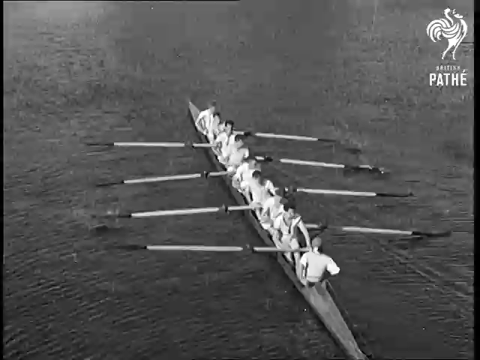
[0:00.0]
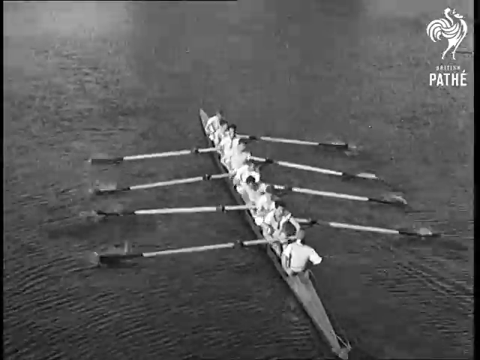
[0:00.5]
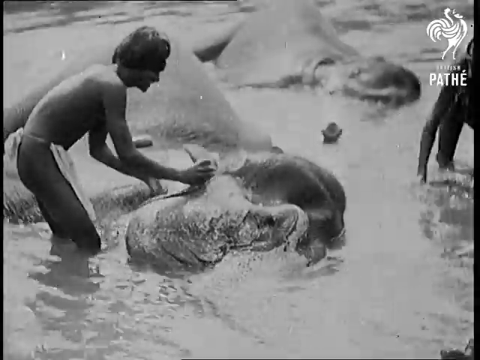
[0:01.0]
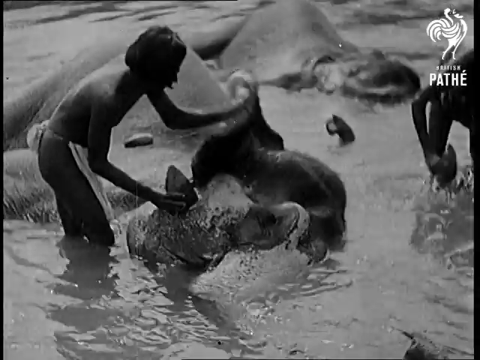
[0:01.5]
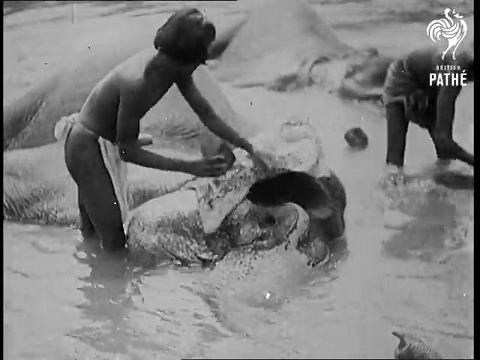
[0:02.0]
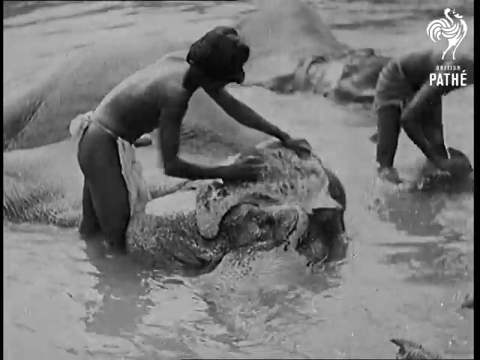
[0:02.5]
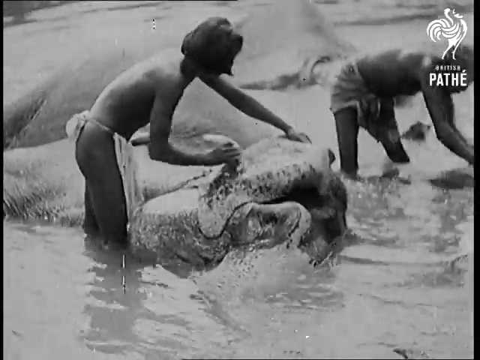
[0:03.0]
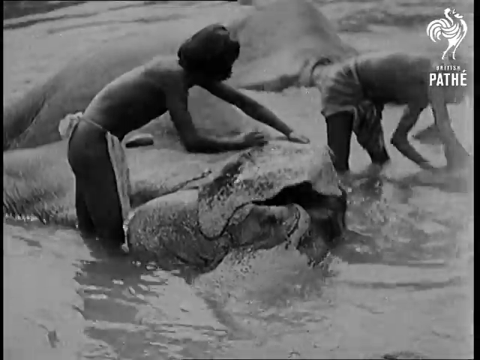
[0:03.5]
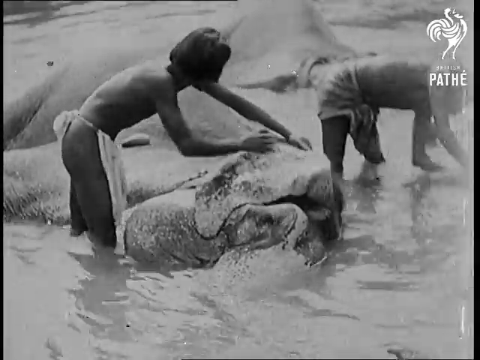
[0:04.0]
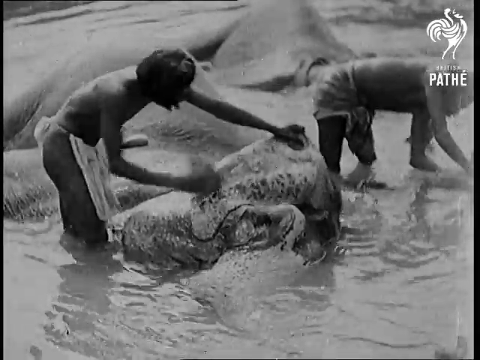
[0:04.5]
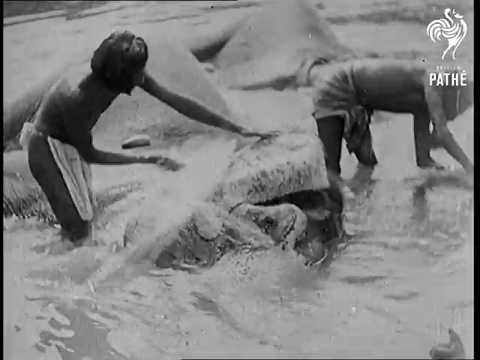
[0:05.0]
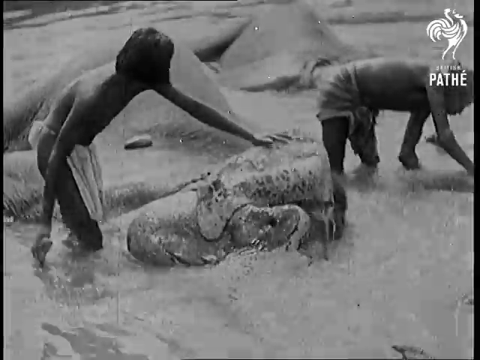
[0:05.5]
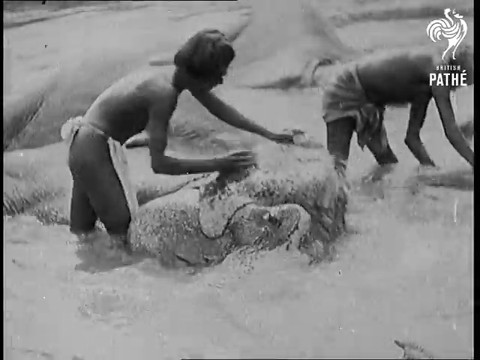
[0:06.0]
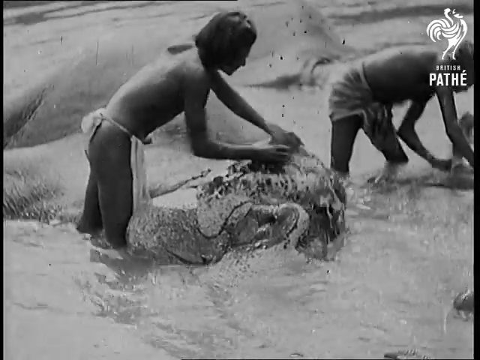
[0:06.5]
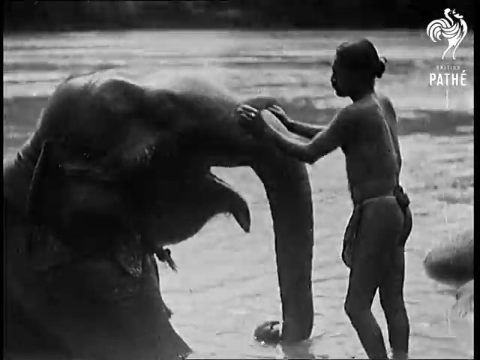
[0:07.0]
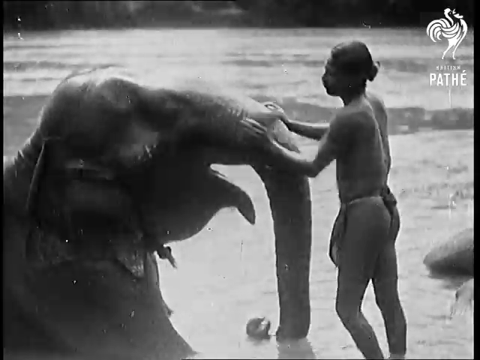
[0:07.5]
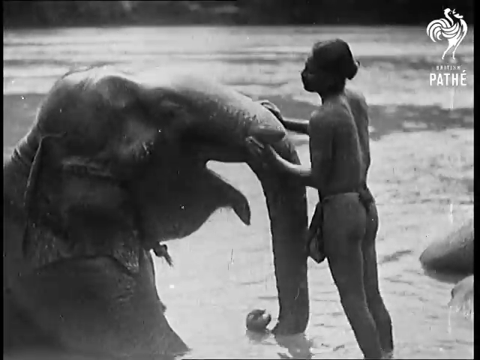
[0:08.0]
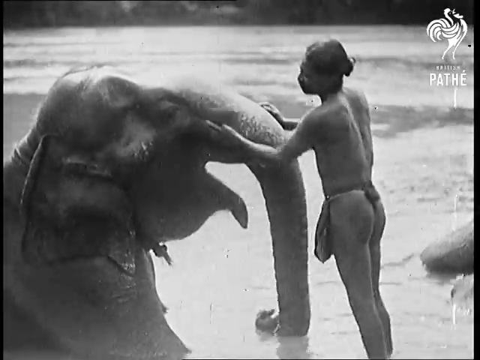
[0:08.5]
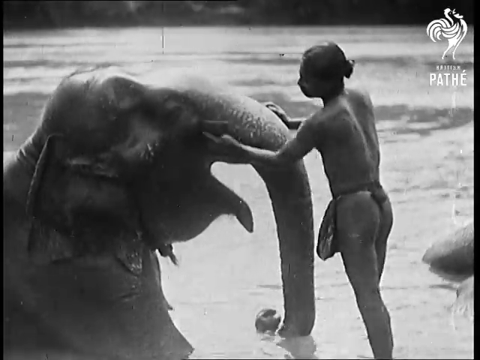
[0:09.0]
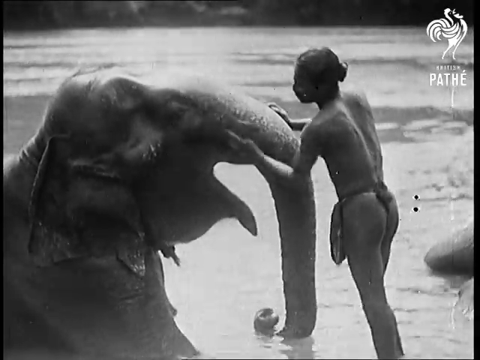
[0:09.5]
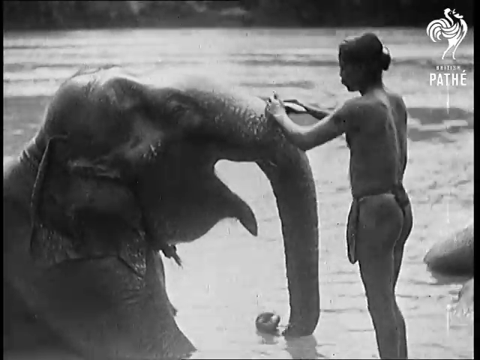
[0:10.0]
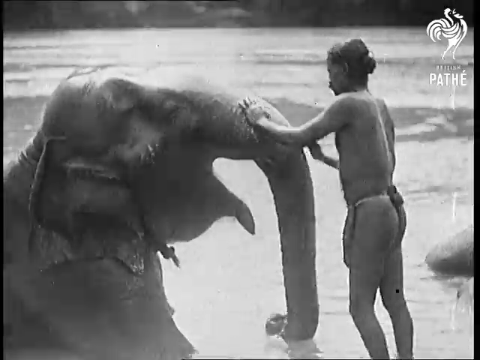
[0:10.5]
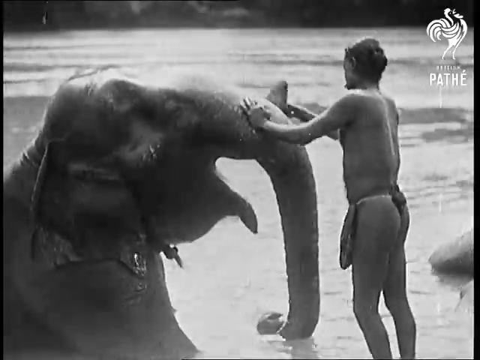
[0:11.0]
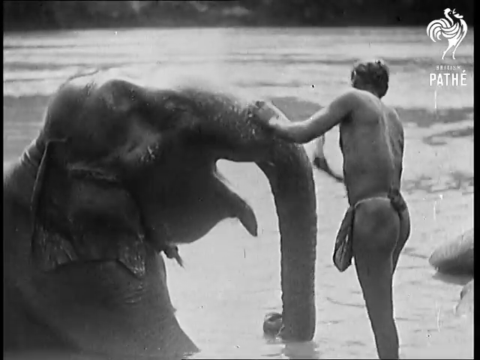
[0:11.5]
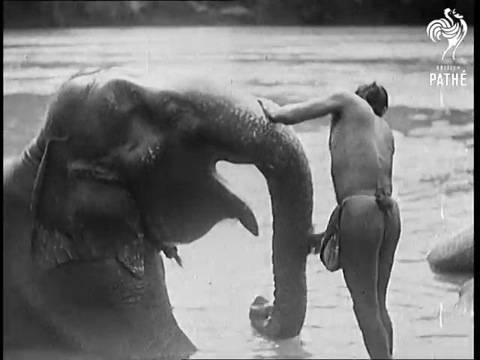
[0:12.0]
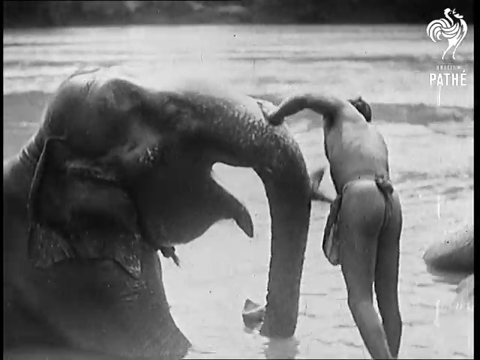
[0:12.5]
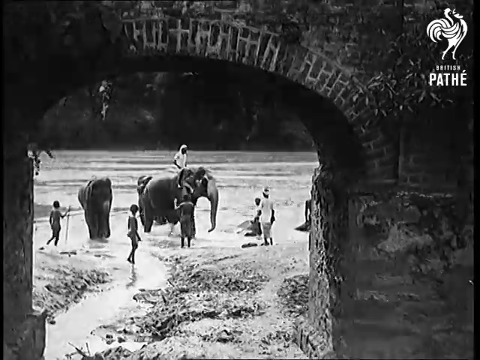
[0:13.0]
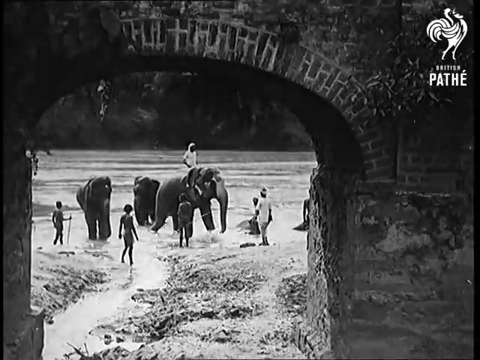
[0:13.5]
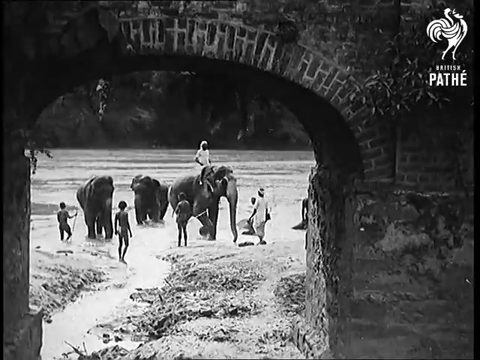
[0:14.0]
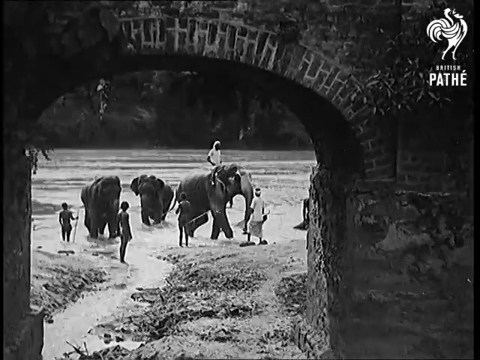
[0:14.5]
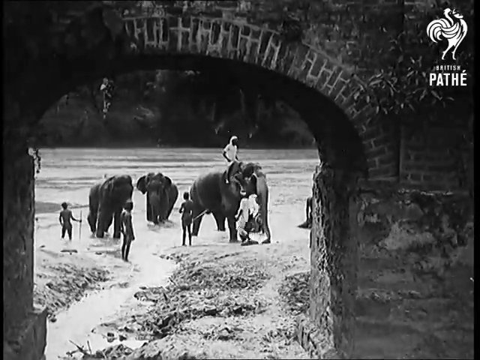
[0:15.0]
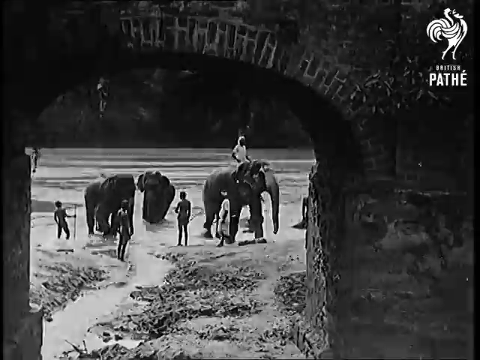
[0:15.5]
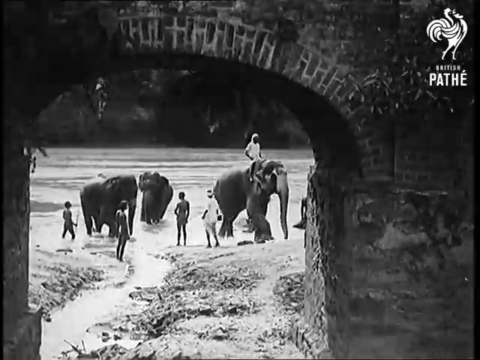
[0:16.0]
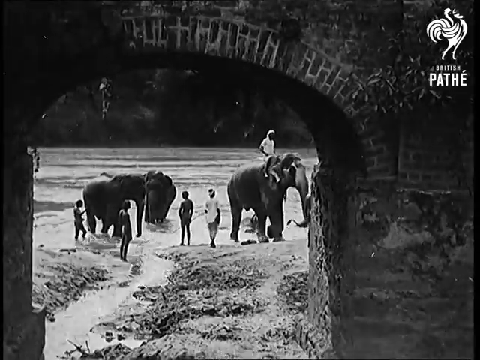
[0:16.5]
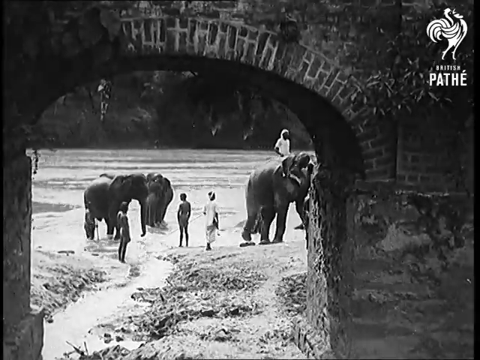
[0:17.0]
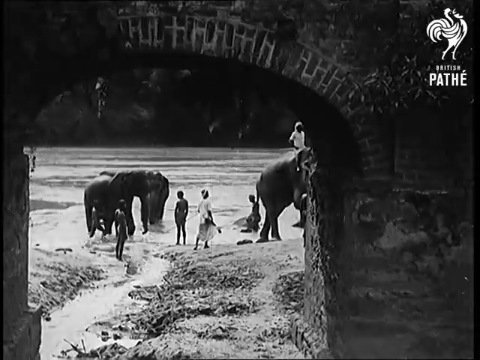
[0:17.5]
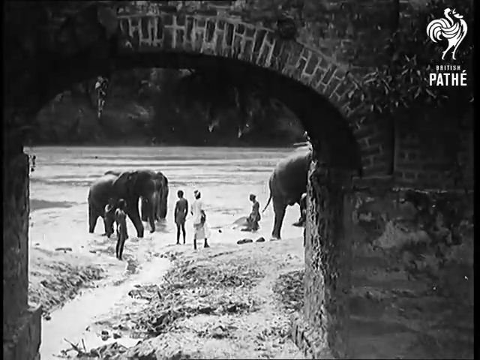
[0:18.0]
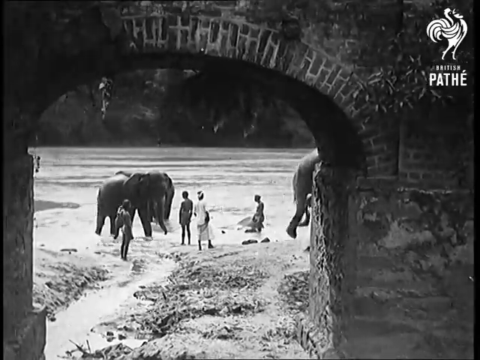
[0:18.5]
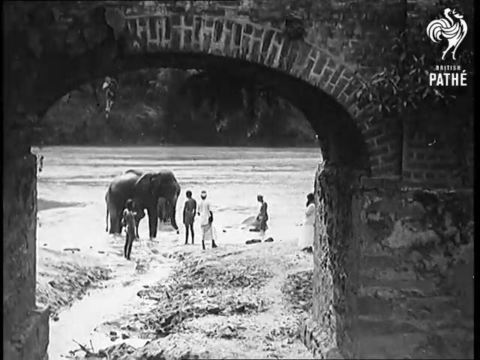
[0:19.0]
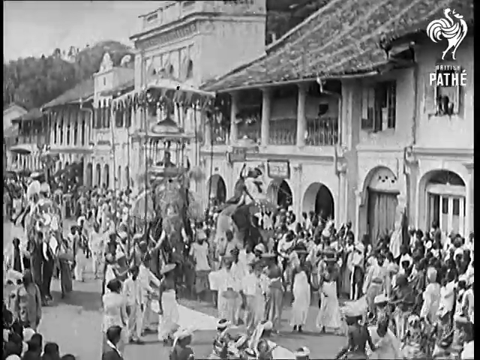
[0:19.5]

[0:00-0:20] A black and white video shows people rowing on a river. The scene then jumps to people washing and bathing an elephant in the river; judging by the backgrounds and the way the elephants are treated, it looks like India. The elephants have their mouths open and seem to be enjoying being bathed. The last scene jumps to a parade in a city, with a lot of people in attendance and elephants marching down the street. The black and white footage is bright.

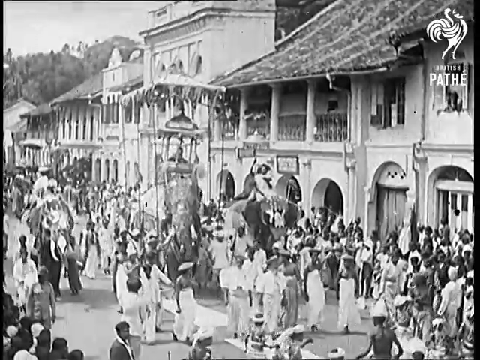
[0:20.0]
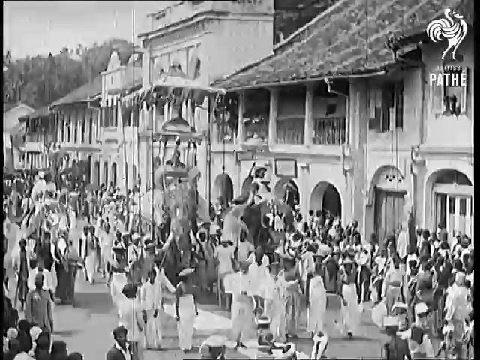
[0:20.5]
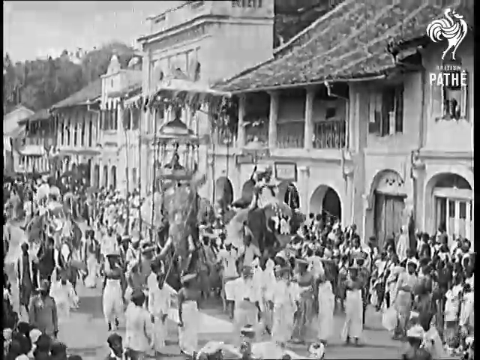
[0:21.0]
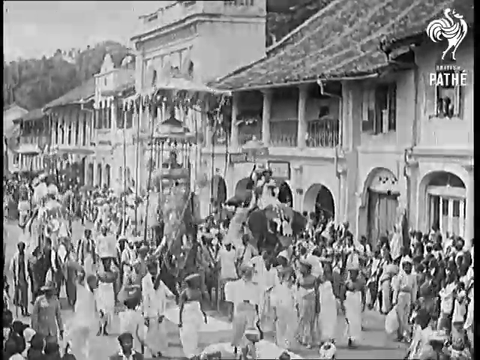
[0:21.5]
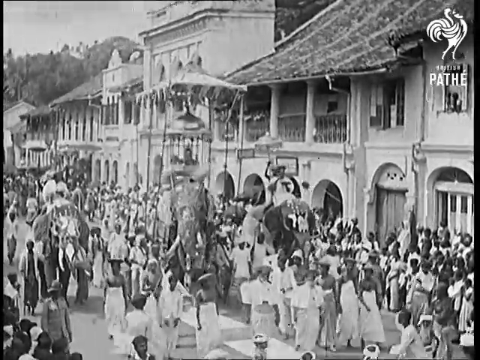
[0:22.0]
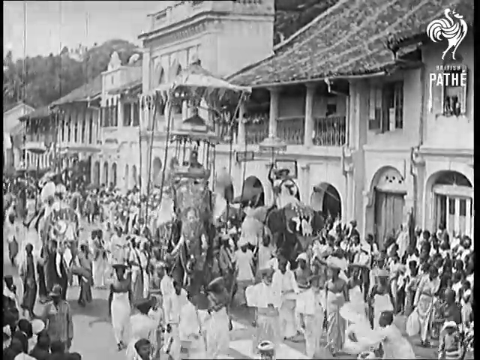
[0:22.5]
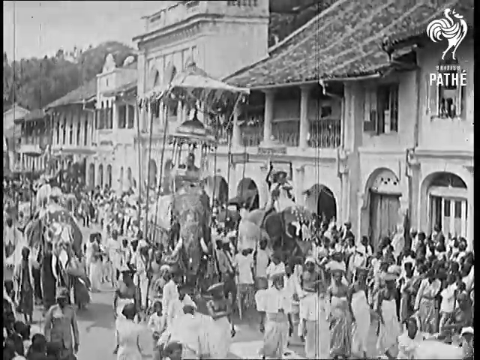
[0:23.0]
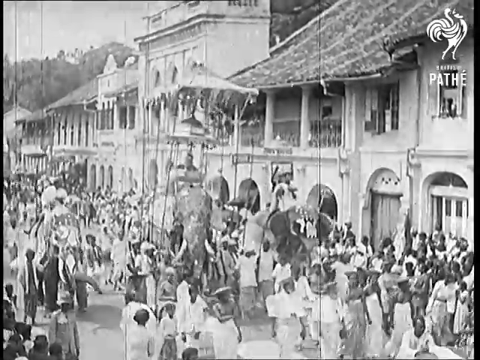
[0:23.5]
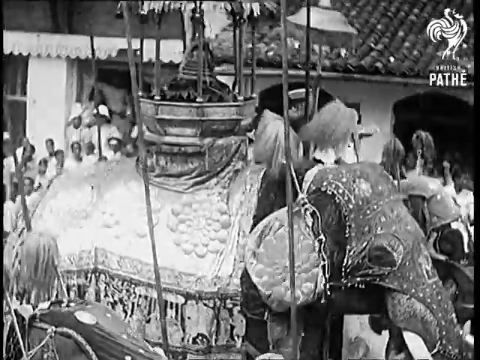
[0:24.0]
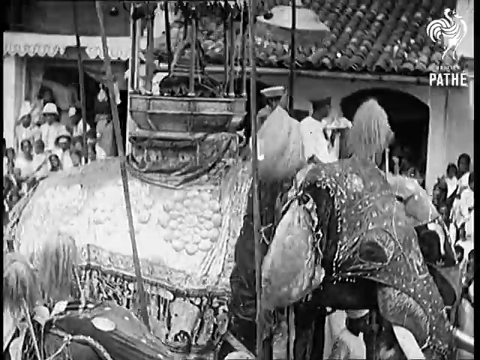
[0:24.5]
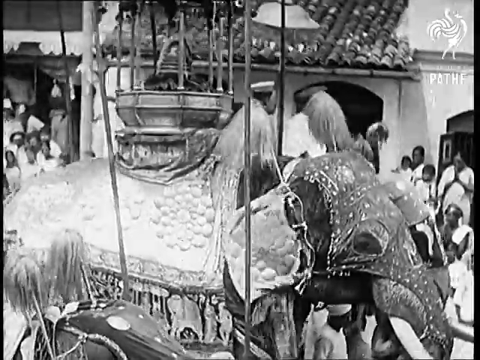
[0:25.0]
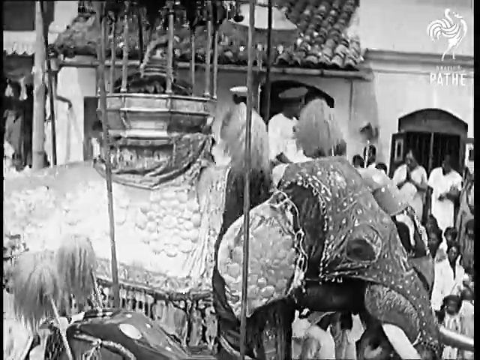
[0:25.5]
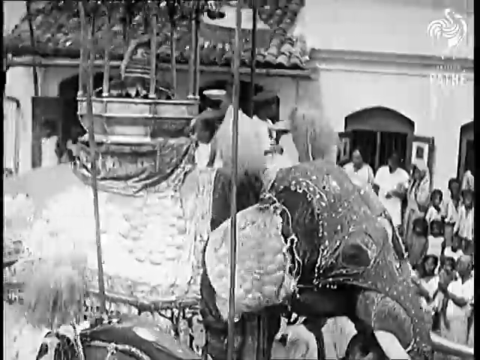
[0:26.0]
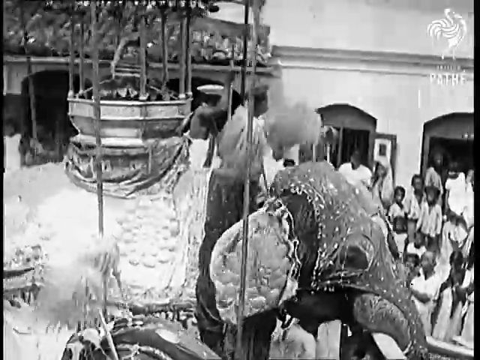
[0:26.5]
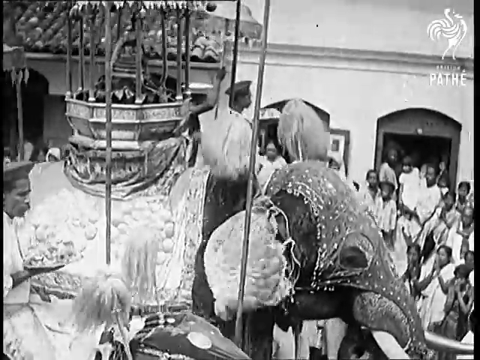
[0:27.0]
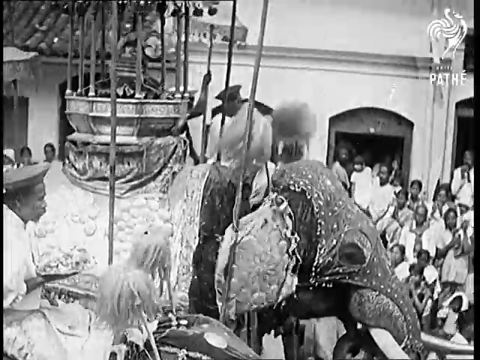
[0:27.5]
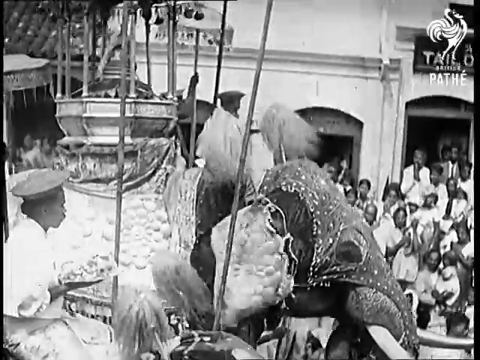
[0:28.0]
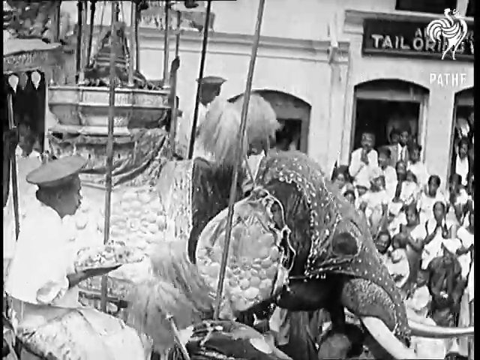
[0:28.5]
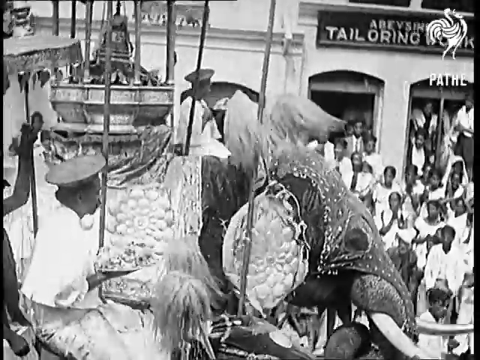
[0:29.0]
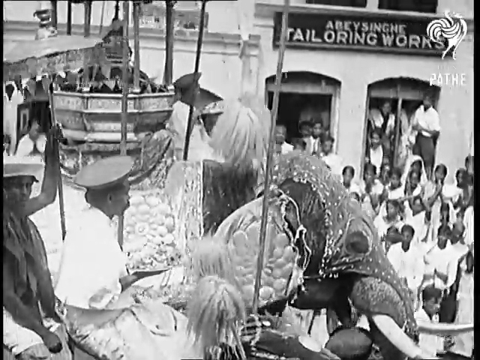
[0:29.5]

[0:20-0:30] A village with elephants appears, in some type of celebration. The elephants are dressed up, and the scene looks like Indian culture. The black and white footage suggests an older film. A lot of people are on the streets watching the parade. The buildings have tile roofing and some arches, in a style that looks kind of like Indian colonial architecture, and the scenery looks like India. The footage is bright.